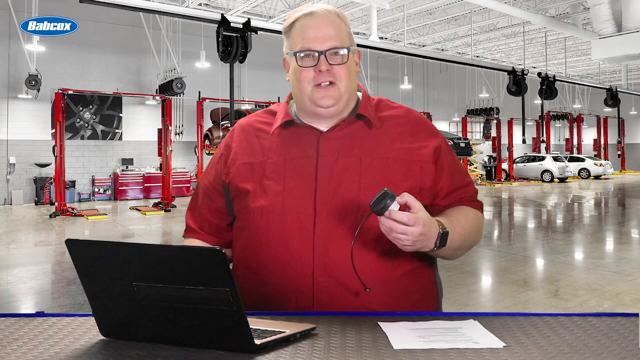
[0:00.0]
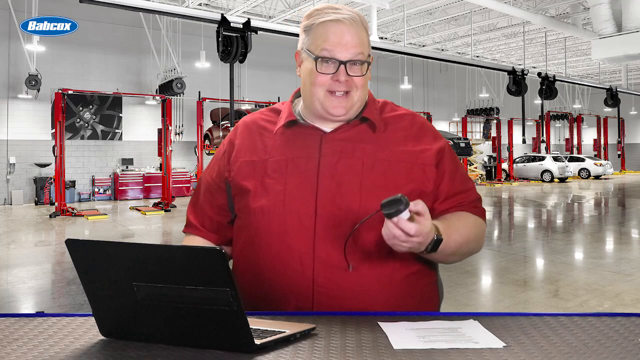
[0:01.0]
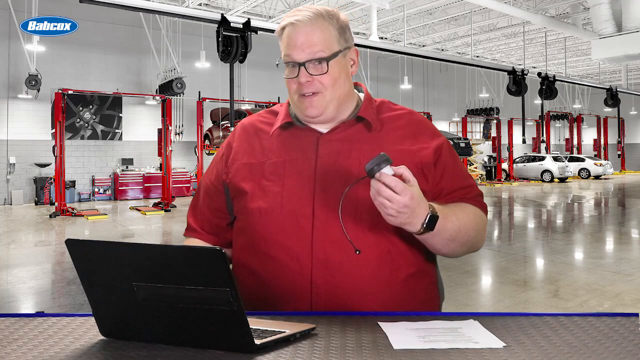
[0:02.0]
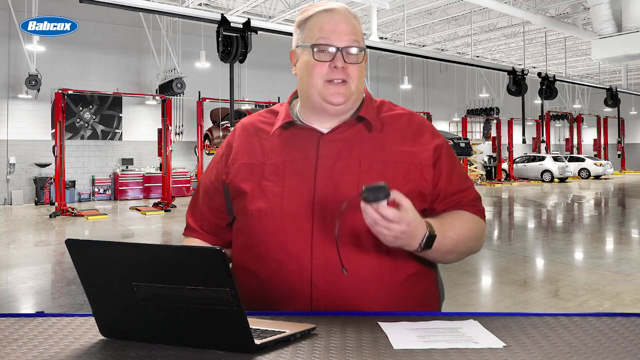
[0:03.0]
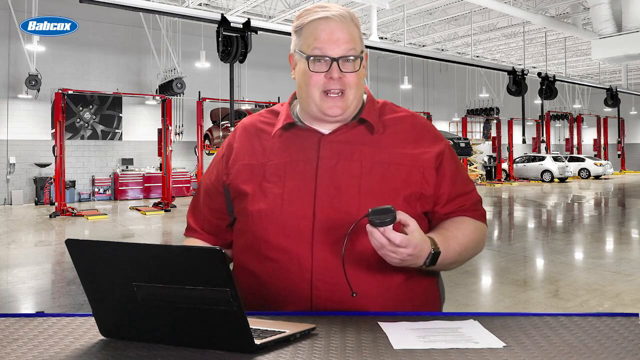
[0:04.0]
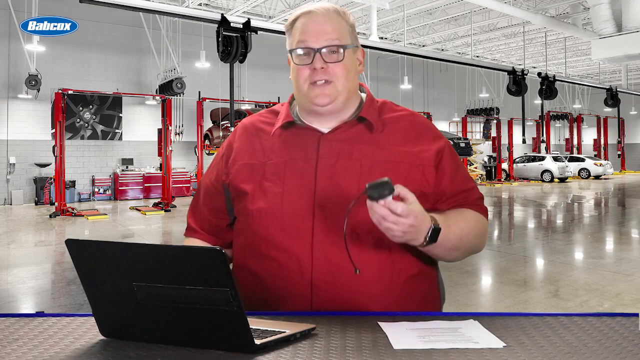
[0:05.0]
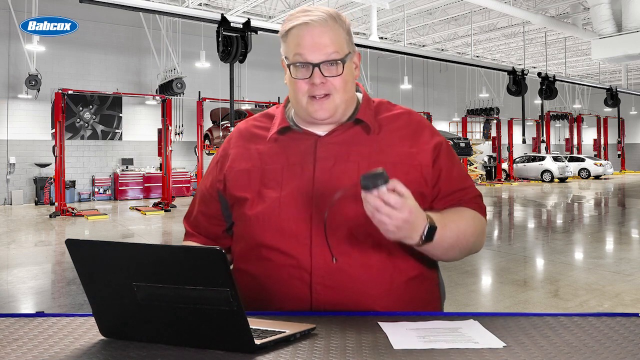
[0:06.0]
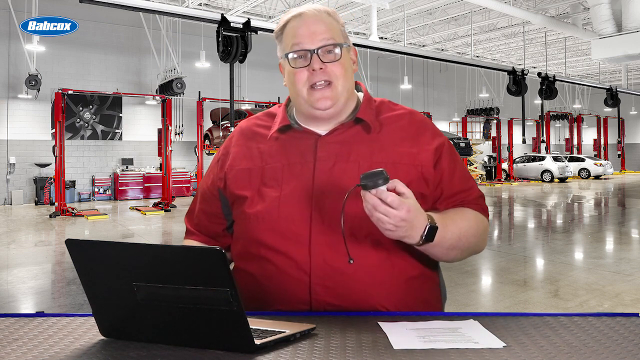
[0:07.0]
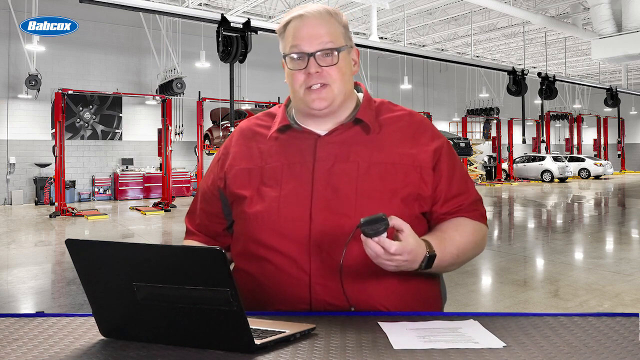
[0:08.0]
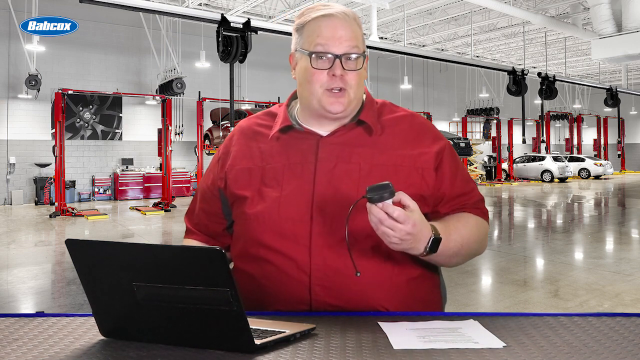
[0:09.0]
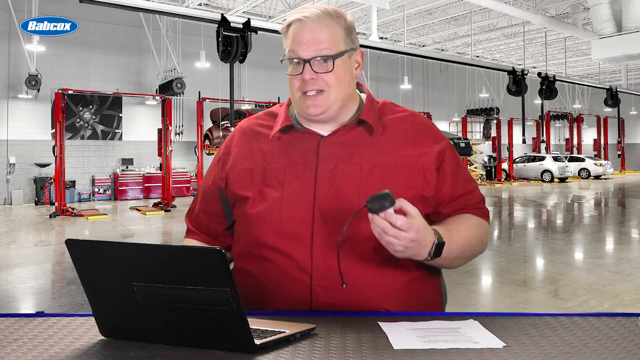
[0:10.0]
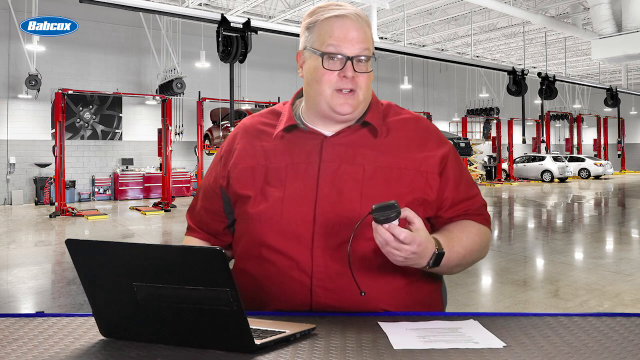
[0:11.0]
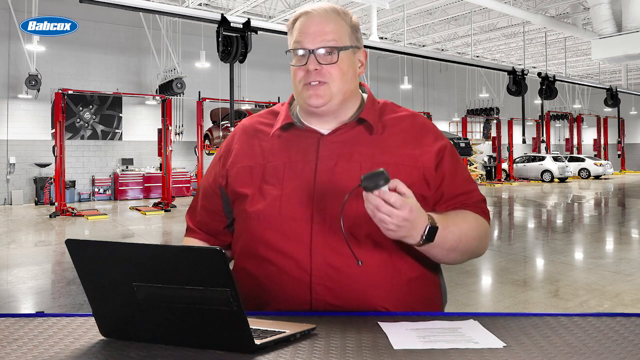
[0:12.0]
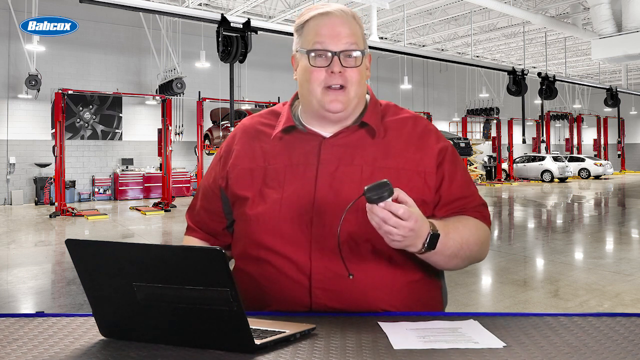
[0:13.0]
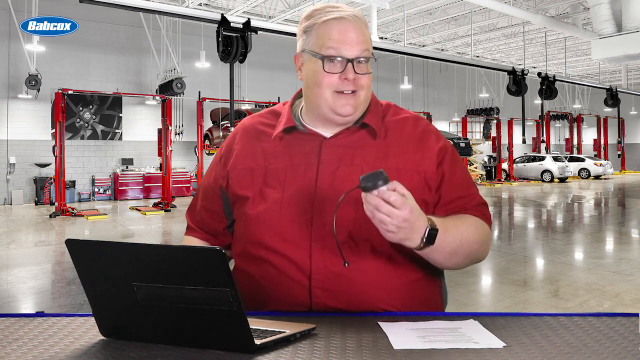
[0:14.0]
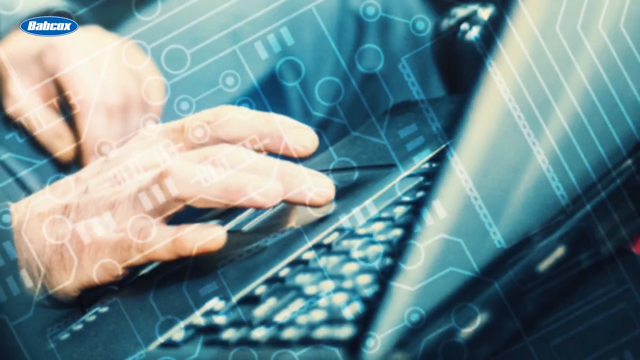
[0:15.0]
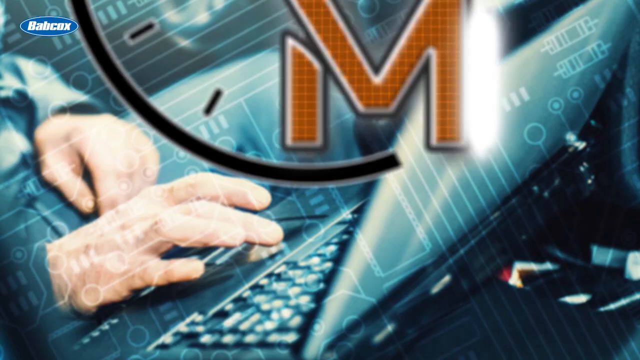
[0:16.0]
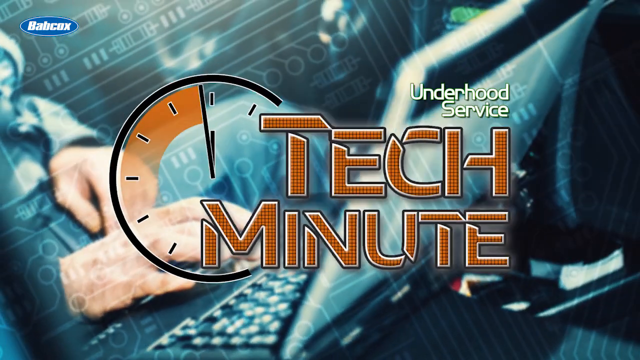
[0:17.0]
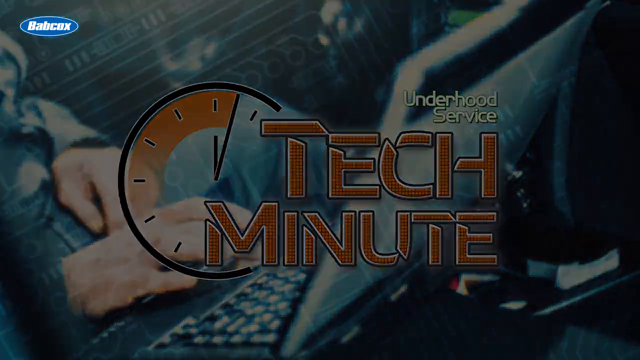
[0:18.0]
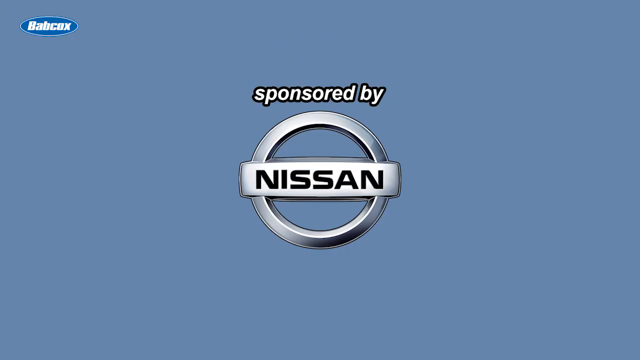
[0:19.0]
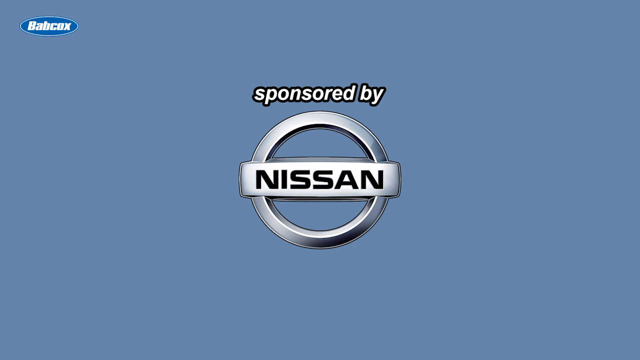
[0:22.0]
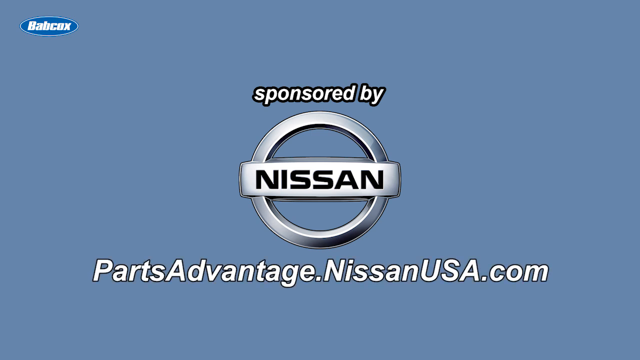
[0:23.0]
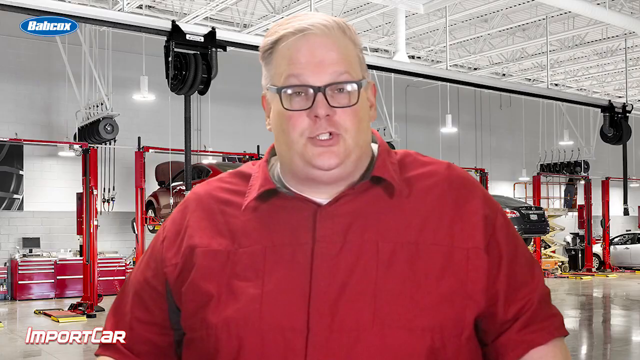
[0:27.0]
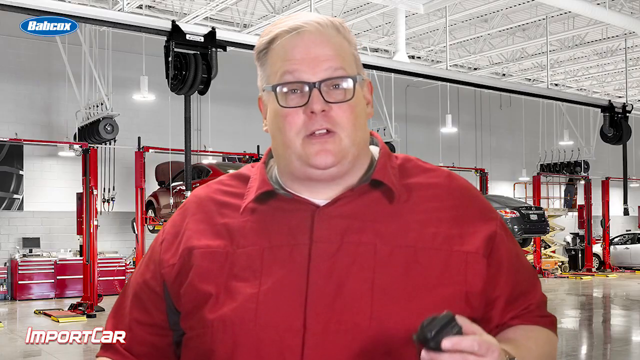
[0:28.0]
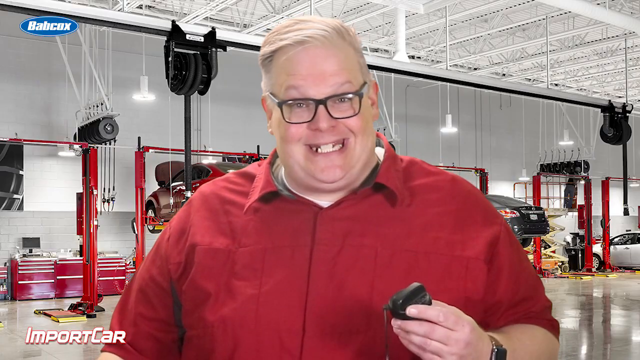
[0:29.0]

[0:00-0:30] A very large white man wearing glasses appears. He has short blonde hair, wears a red short-sleeve shirt and a watch, and holds a gas cap in his left hand. A laptop computer is in front of him, and he is standing in the service garage of a Nissan dealership. In the background are several vehicles waiting to be serviced, along with the toolboxes the service personnel use. He has a friendly demeanor as he begins speaking, moving his left hand with the gas cap up and down. The message is from the Tech Minute, by Nissan PartsAdvantage, NissanUSA.com.